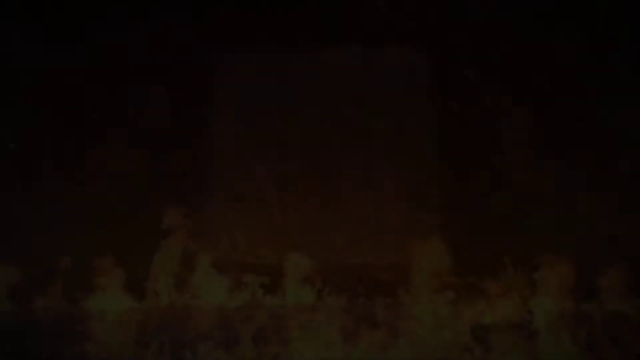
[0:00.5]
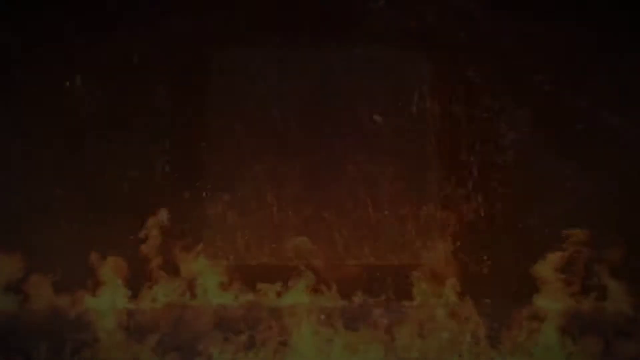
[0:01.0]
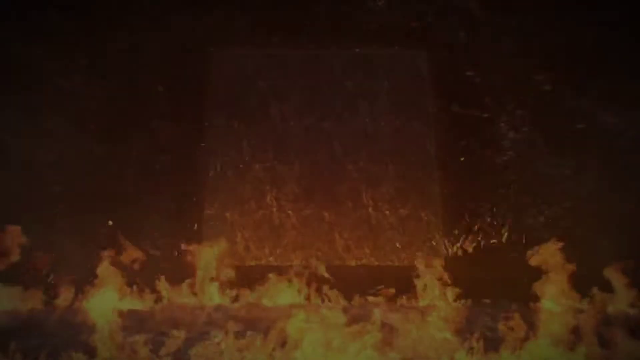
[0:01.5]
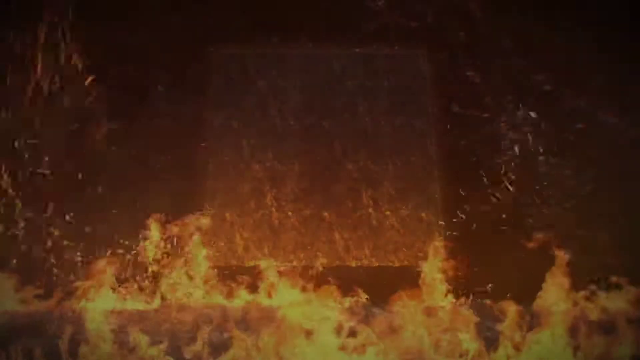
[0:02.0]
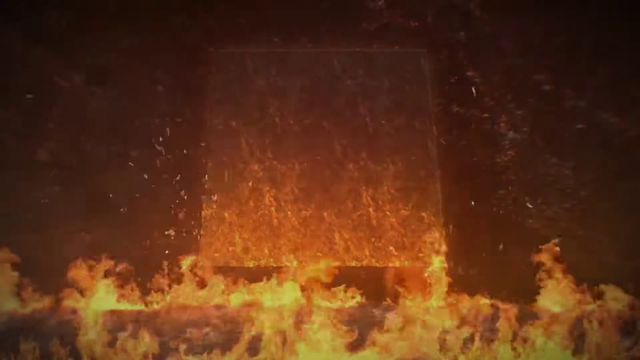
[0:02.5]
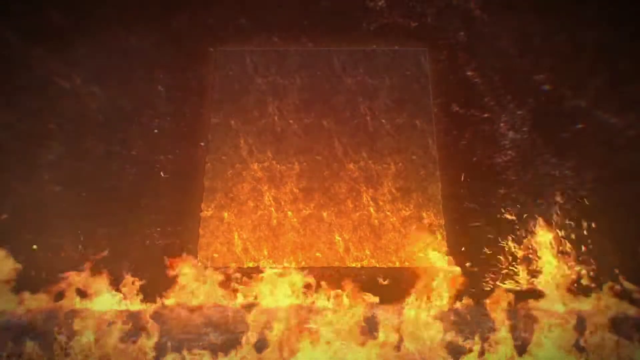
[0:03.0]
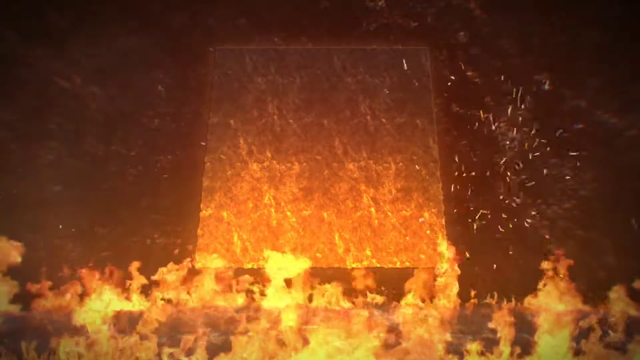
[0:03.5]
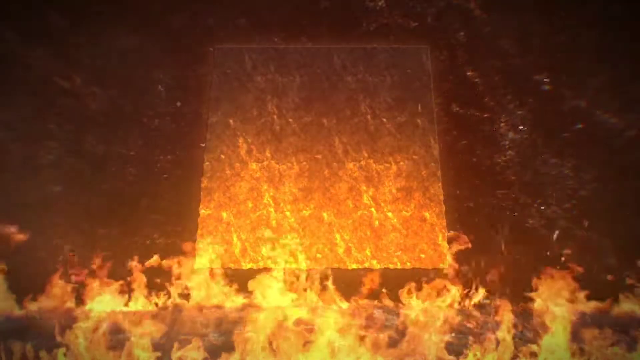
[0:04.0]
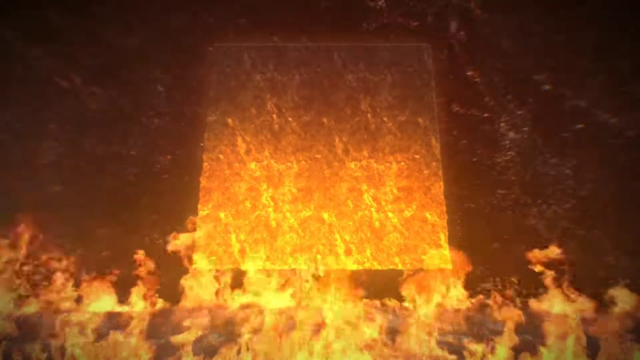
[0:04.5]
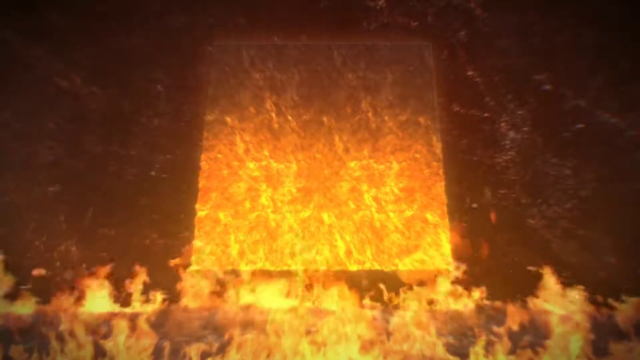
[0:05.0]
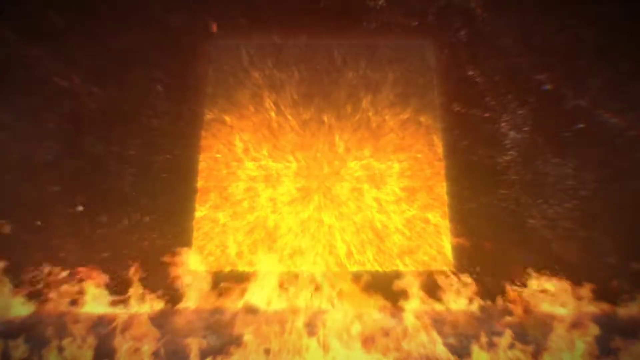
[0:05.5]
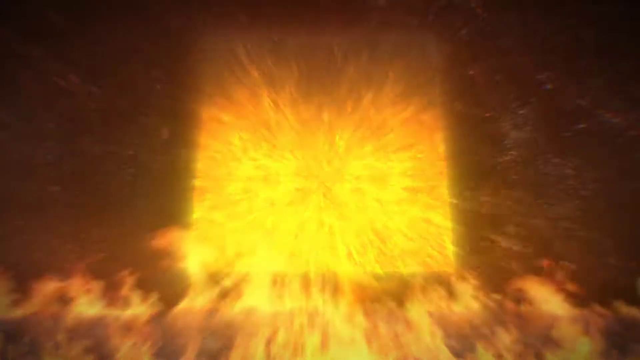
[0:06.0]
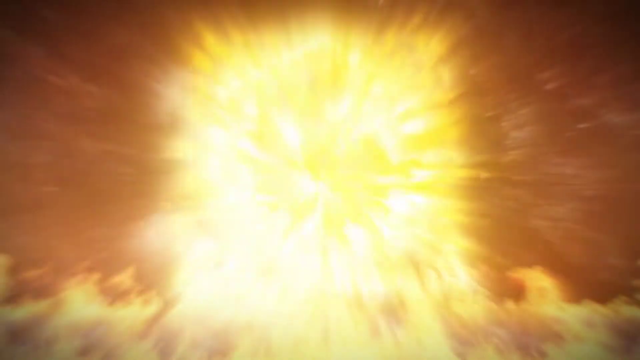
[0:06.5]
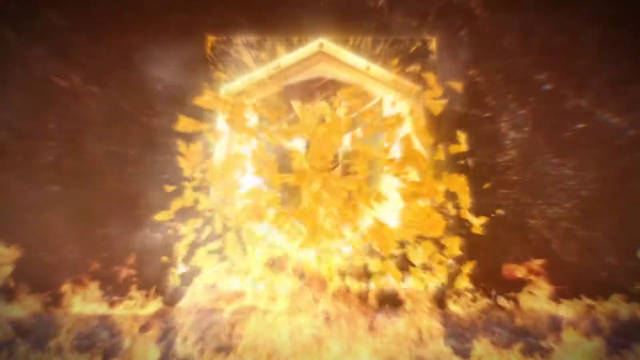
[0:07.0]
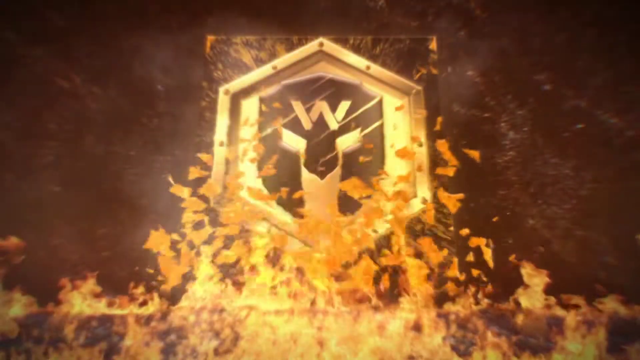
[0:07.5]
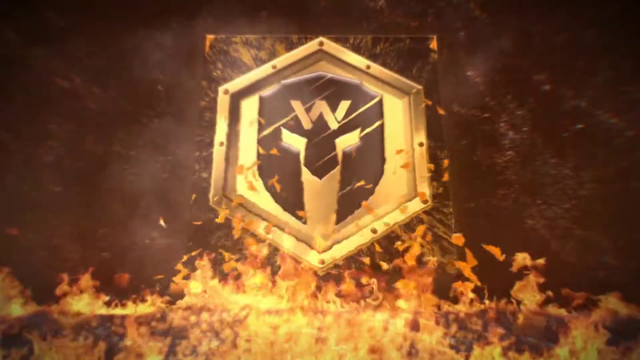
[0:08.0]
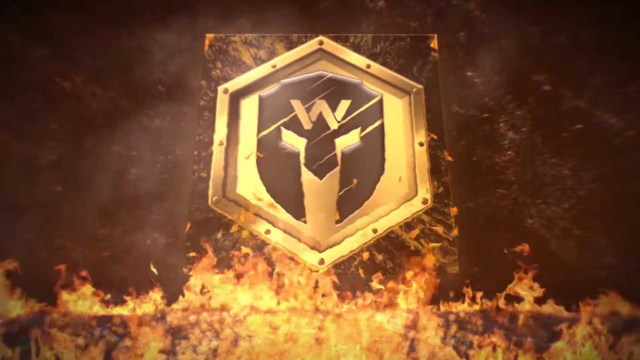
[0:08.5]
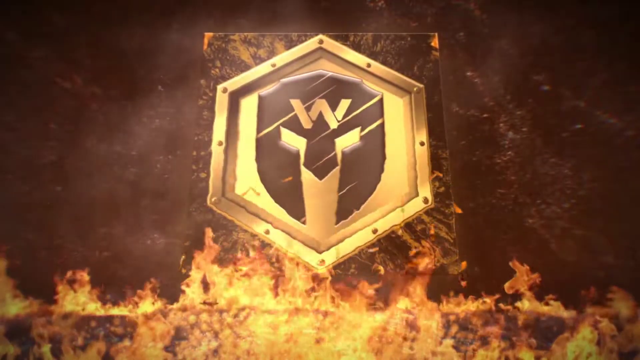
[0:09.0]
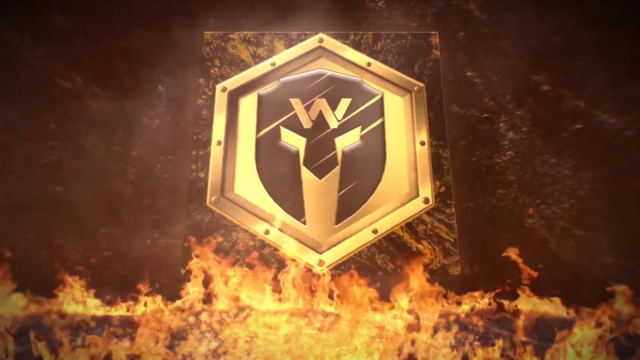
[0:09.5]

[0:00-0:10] What looks like a video game opens with fire at the front of the screen and a big gold square in the back that appears to be on fire. The square moves closer and closer toward the screen, then explodes, and as it explodes an unidentified logo with a W on the top appears. The screen shows fire blazing in the front and the gold, burning square exploding into the screen.